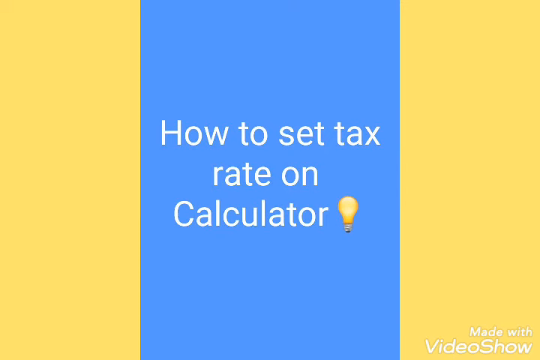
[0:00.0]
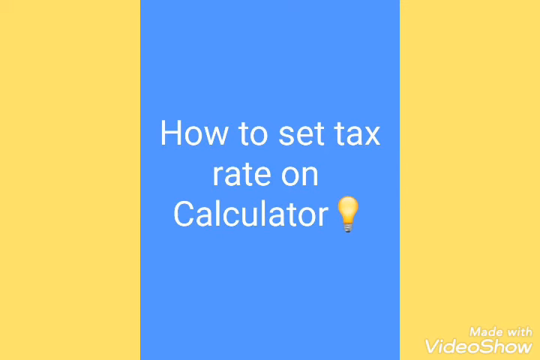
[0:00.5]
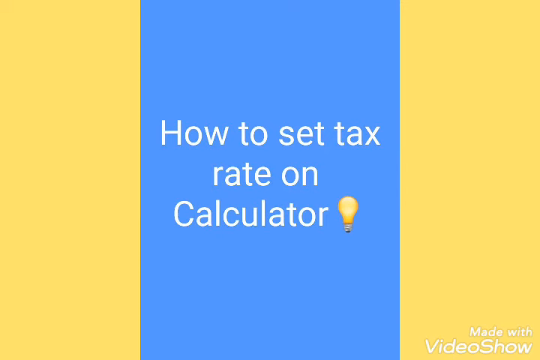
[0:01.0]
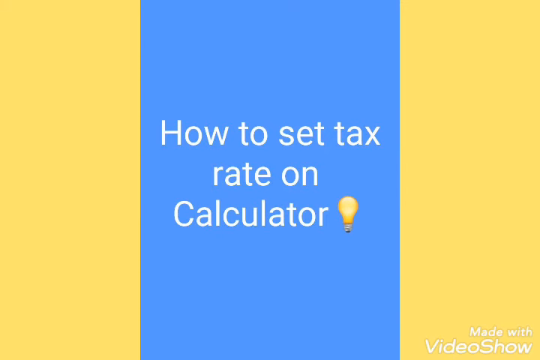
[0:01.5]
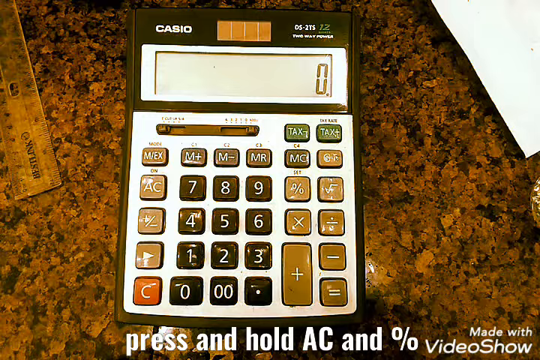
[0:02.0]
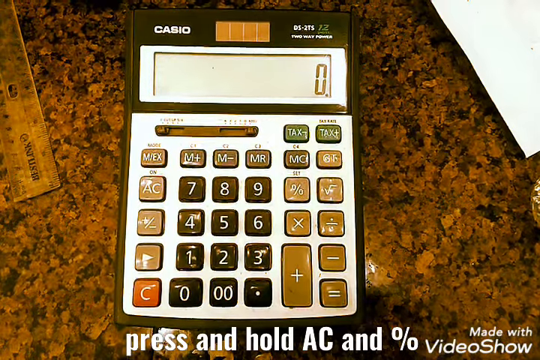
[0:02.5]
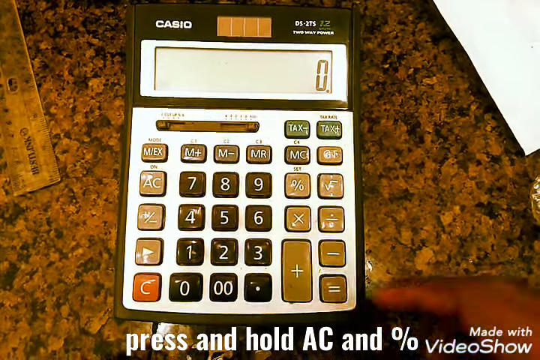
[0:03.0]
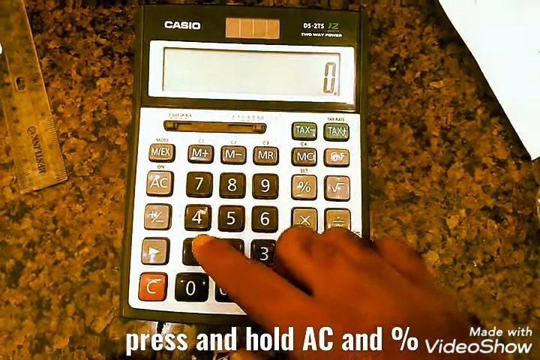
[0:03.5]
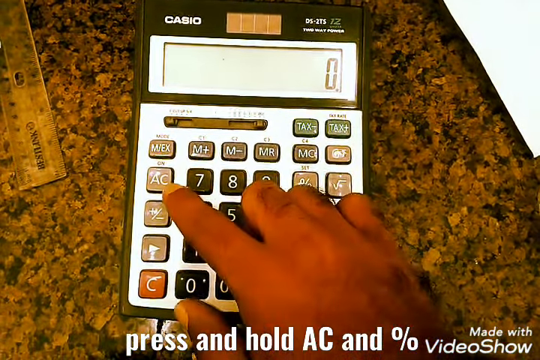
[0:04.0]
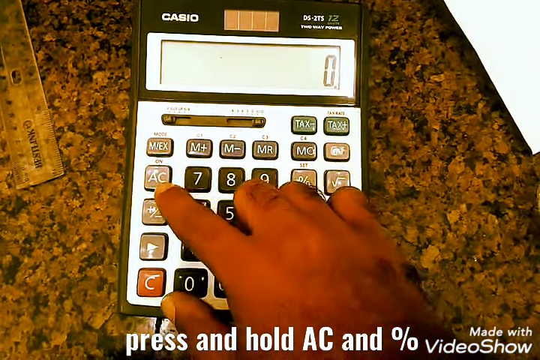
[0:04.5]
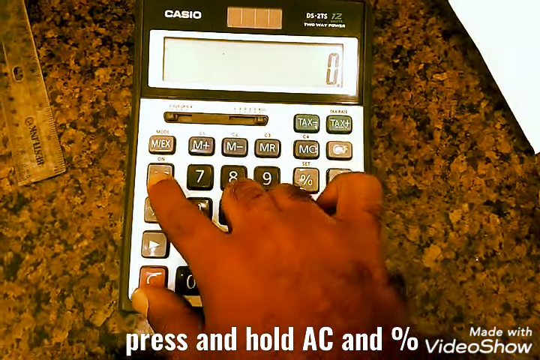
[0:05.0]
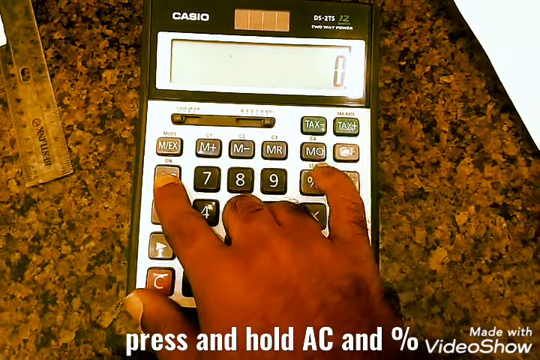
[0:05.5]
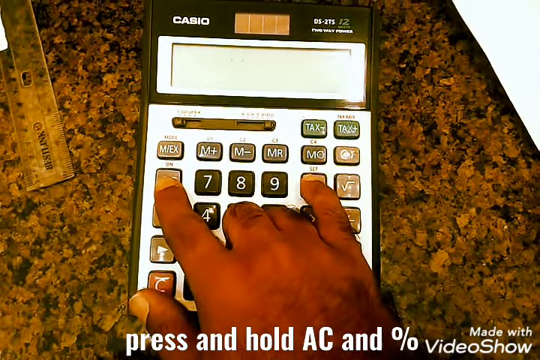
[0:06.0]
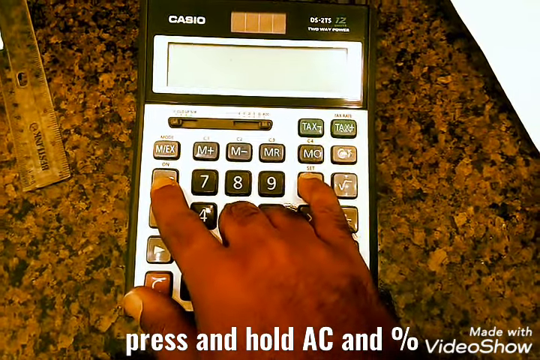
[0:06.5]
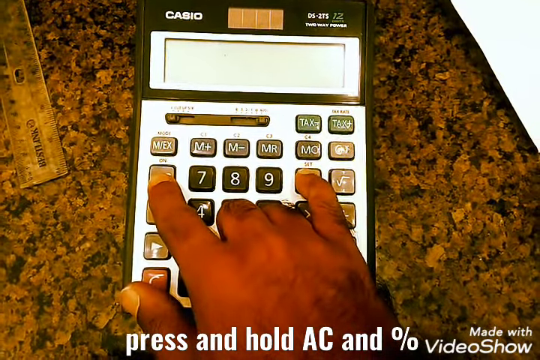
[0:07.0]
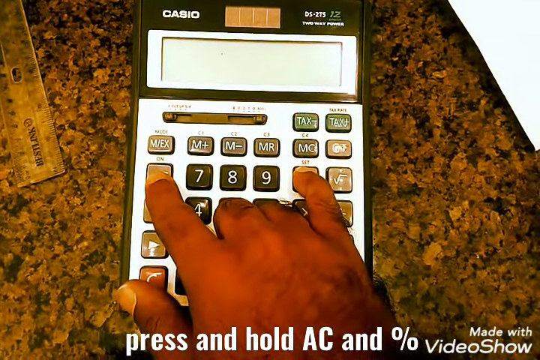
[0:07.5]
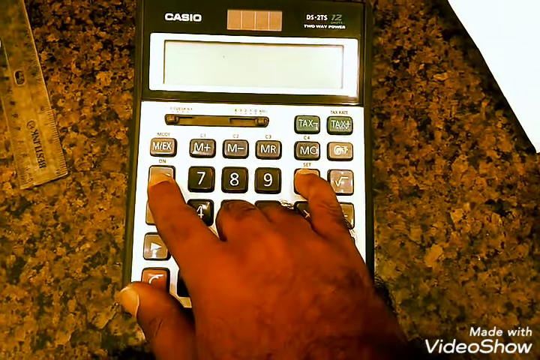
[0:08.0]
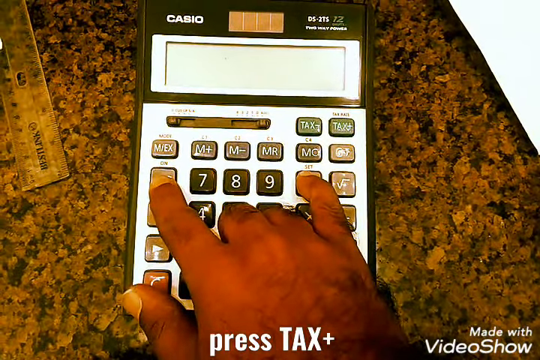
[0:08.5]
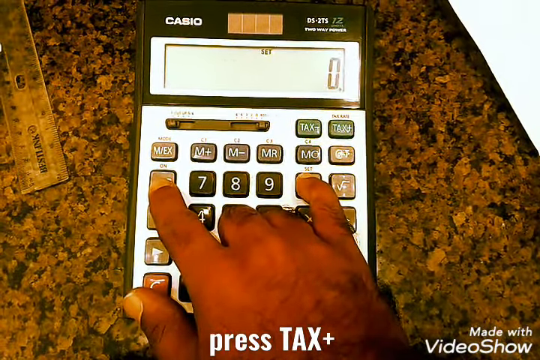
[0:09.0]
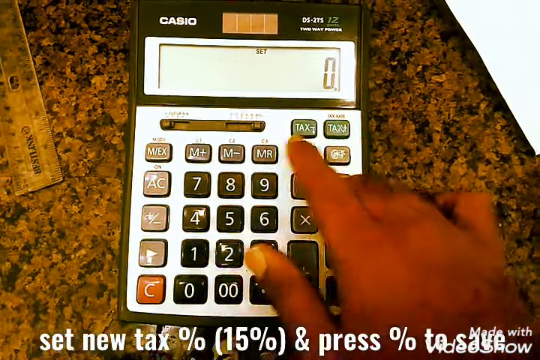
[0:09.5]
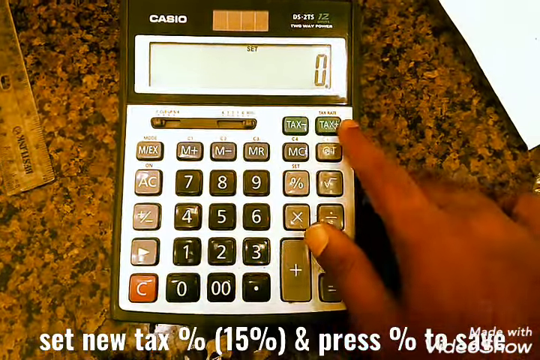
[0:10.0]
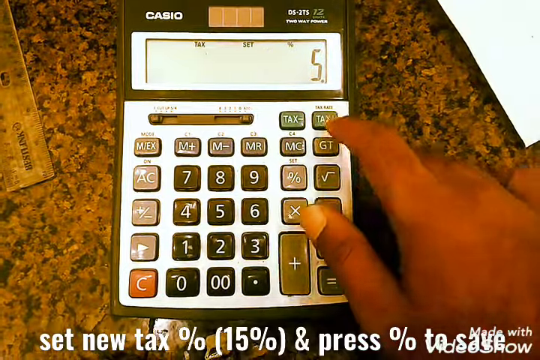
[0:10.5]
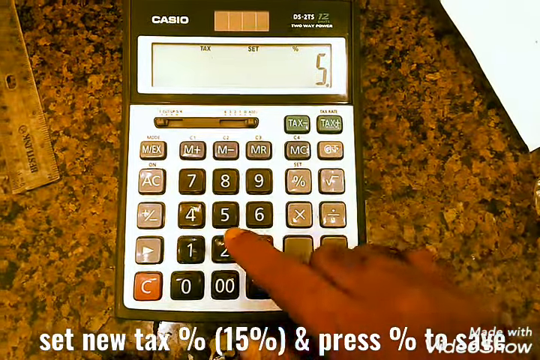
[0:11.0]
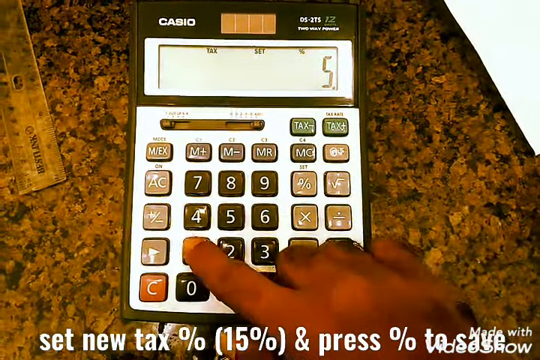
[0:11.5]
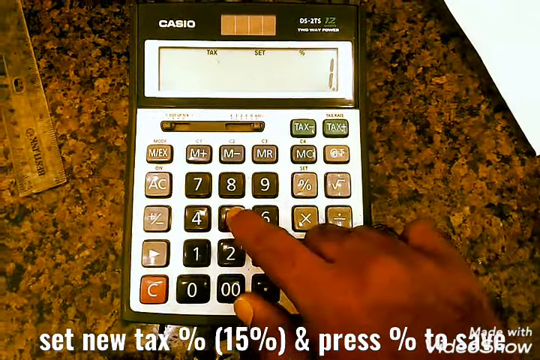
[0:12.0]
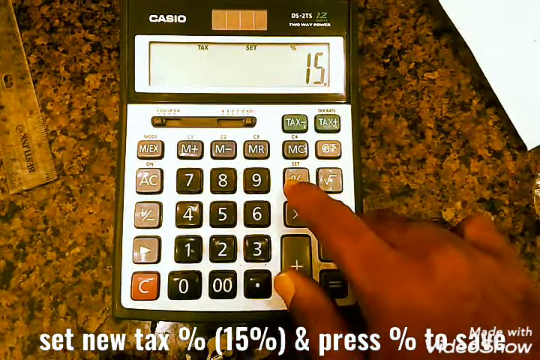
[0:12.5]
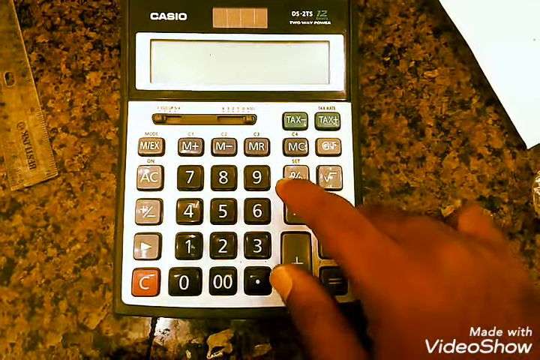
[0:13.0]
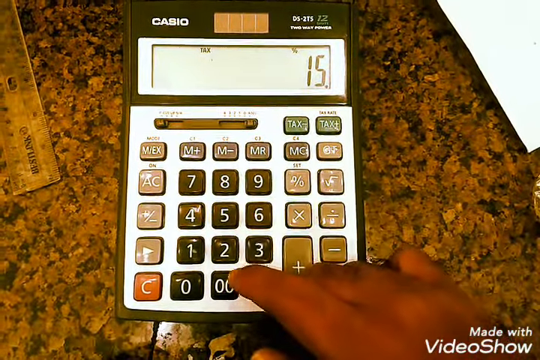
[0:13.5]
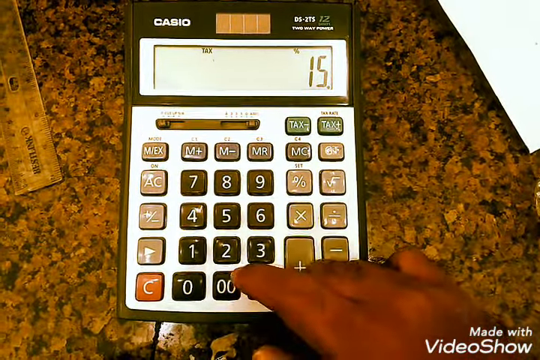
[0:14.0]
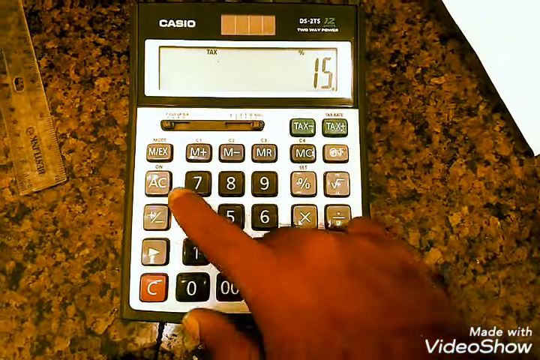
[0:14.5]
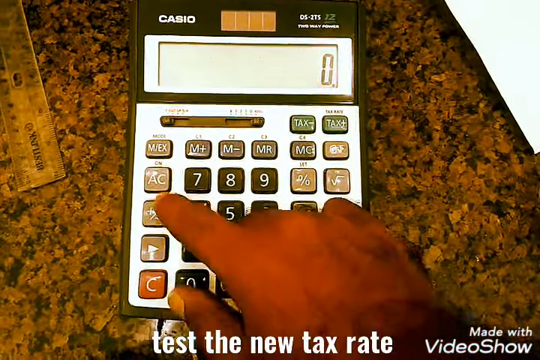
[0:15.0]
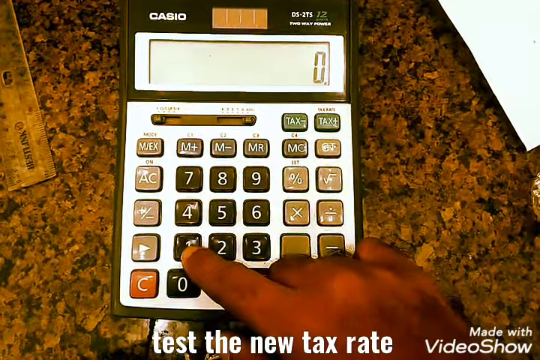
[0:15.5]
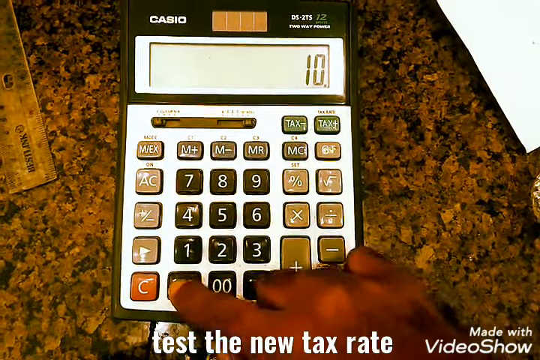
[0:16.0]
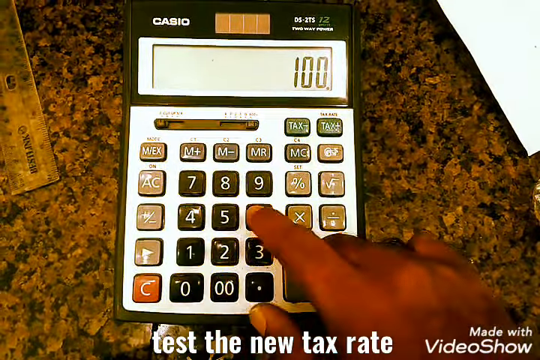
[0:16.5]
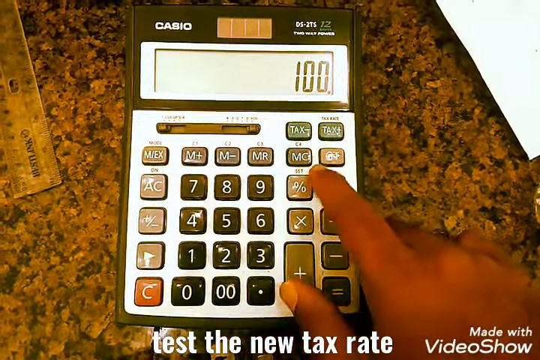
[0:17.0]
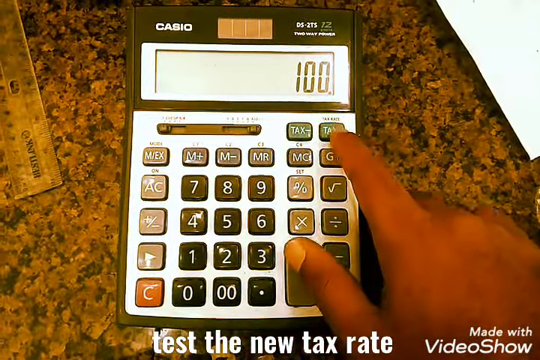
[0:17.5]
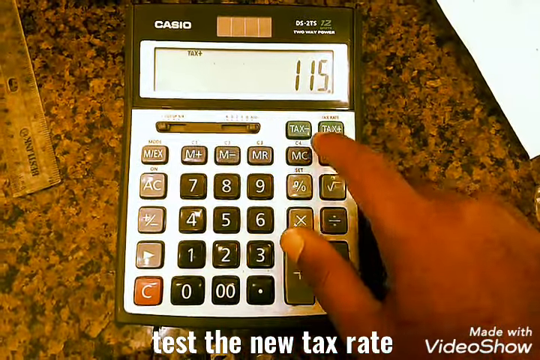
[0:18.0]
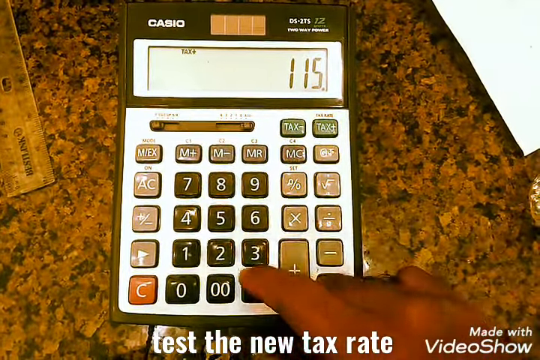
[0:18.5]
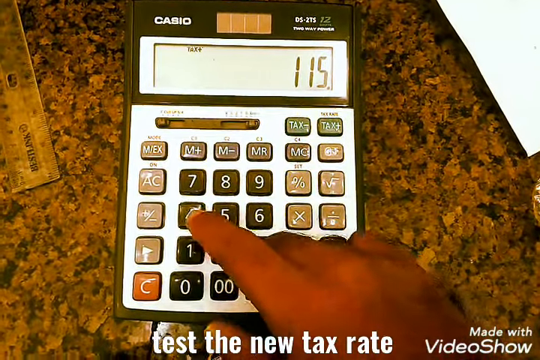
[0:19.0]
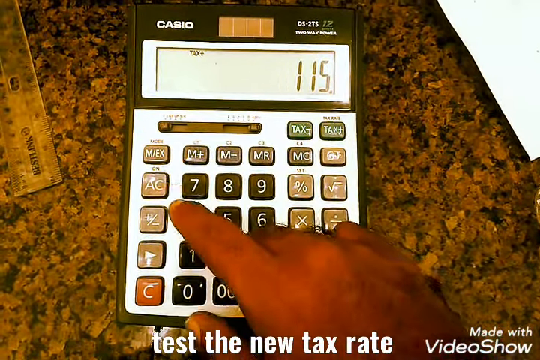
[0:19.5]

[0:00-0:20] The video opens with a plain, two-tone graphic, yellow on either side and blue in the middle, announcing how to set a tax rate on a calculator, with a light bulb emoji. It then cuts to a standard desk calculator, a Casio, and a person's hand pressing its buttons. The person has brownish or olive-colored skin. They start by pressing the number 1. Directions at the bottom of the screen tell the viewer to press AC and hold the percentage sign, and the person does so with their pointer and pinky fingers. They then press buttons to enter the new tax rate, and the numbers pop up on the display before the video cuts.